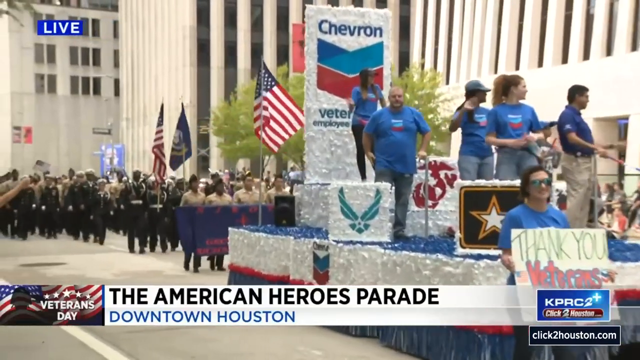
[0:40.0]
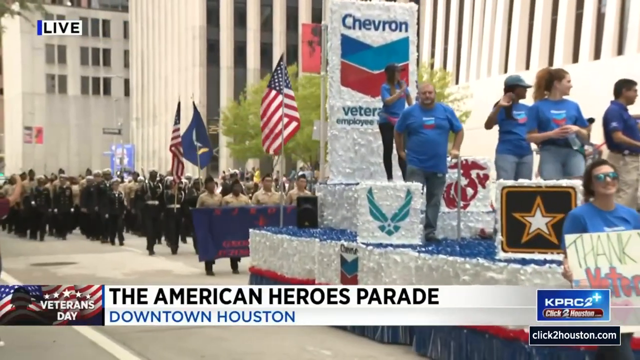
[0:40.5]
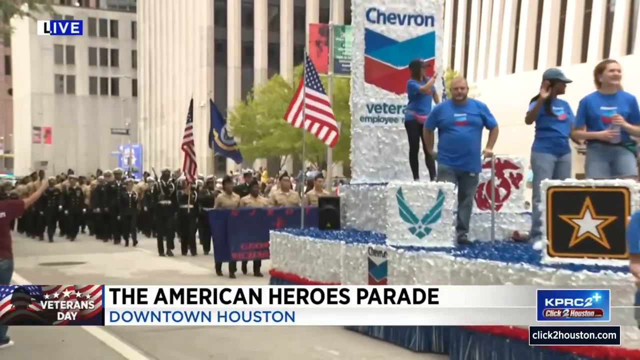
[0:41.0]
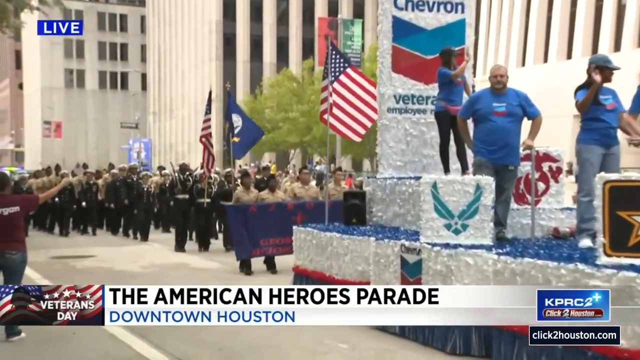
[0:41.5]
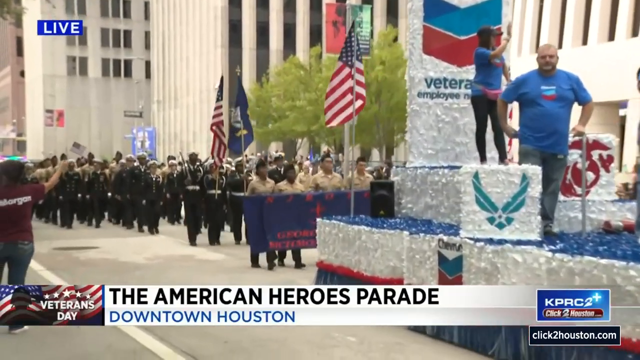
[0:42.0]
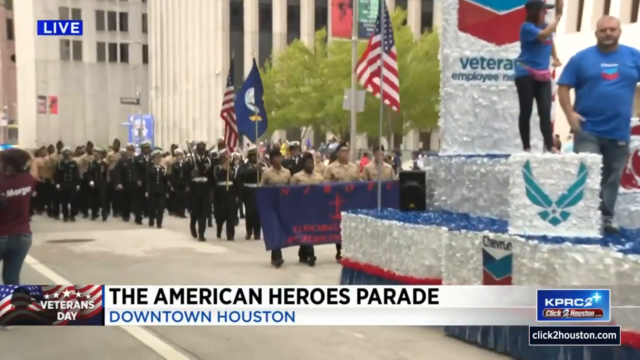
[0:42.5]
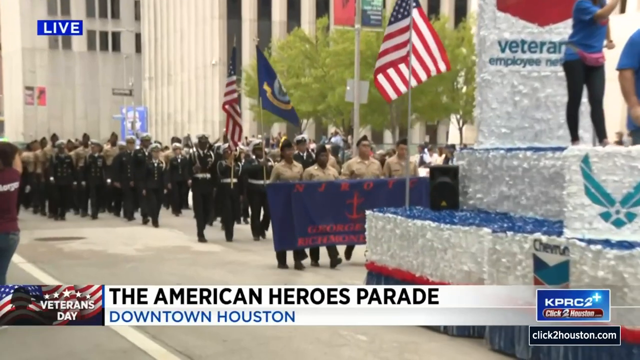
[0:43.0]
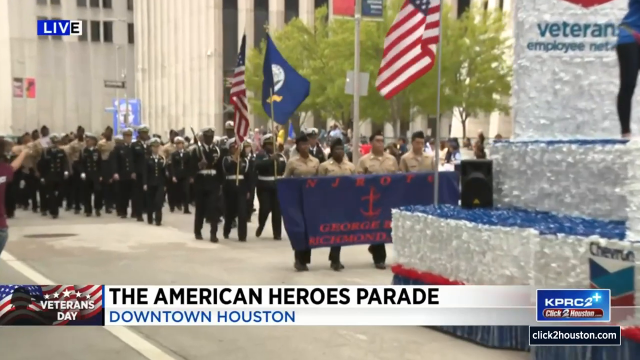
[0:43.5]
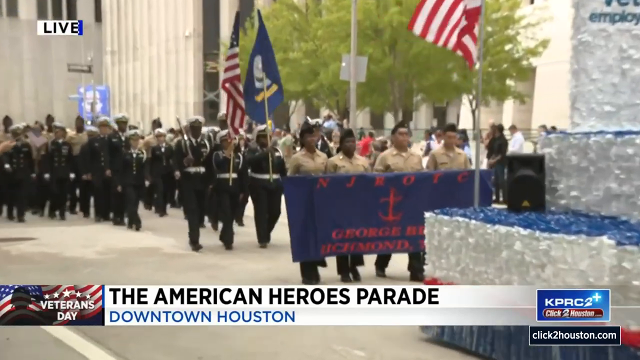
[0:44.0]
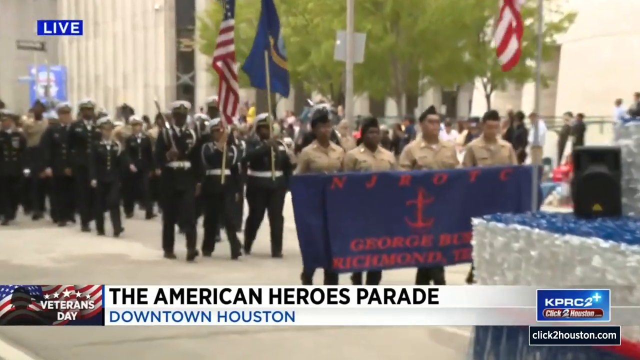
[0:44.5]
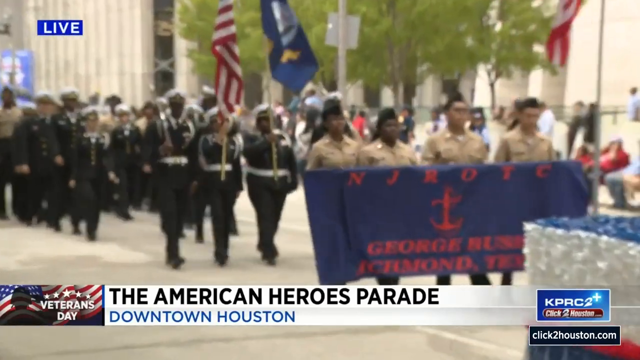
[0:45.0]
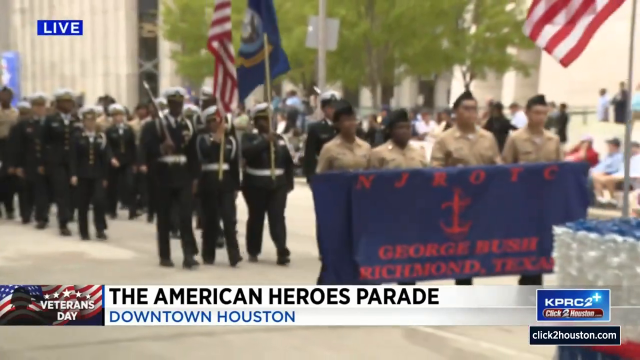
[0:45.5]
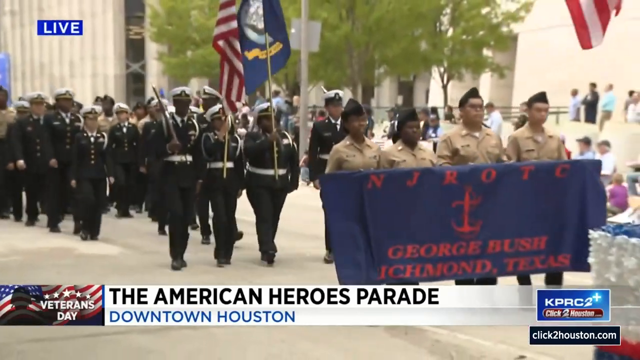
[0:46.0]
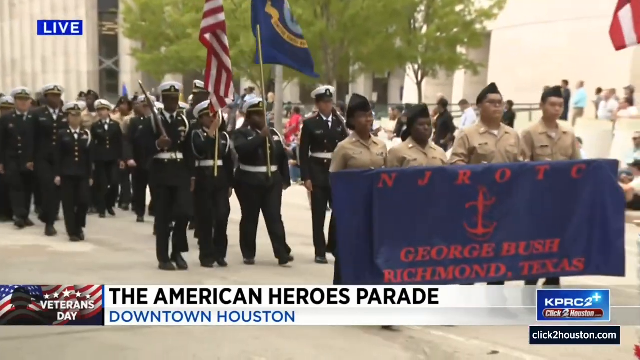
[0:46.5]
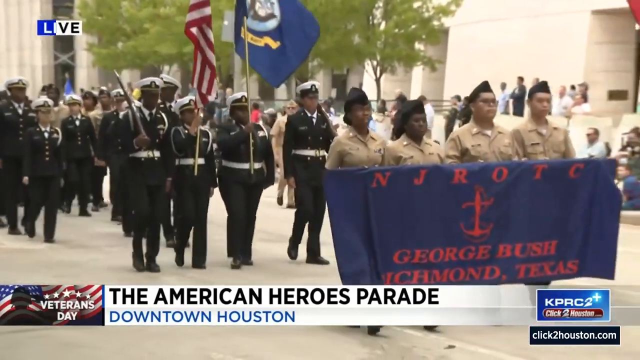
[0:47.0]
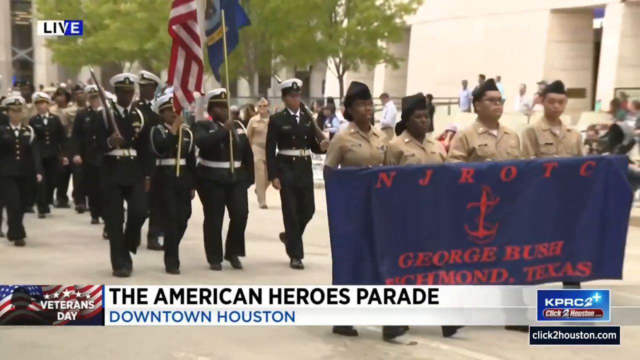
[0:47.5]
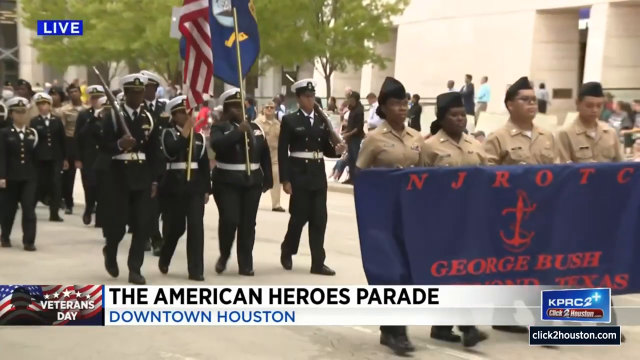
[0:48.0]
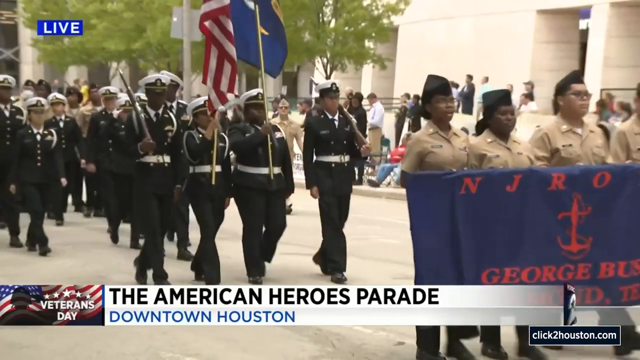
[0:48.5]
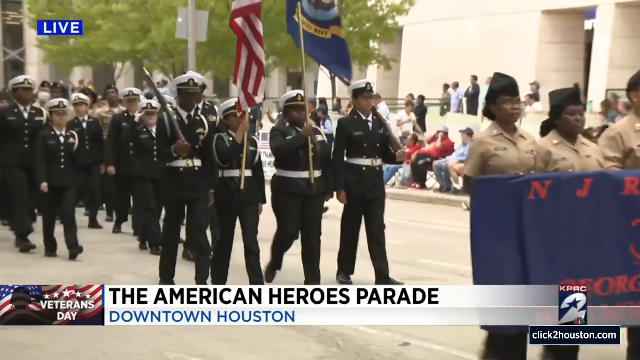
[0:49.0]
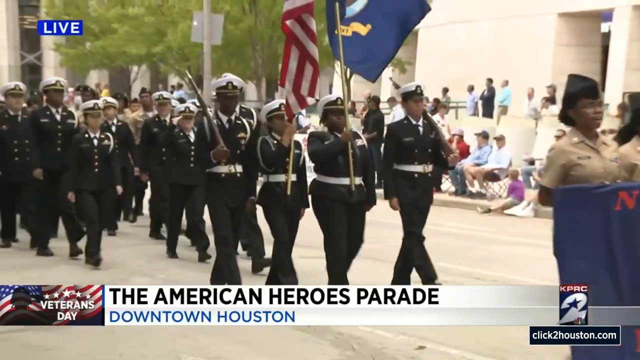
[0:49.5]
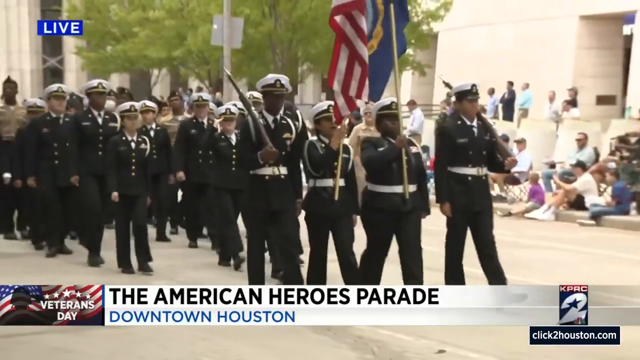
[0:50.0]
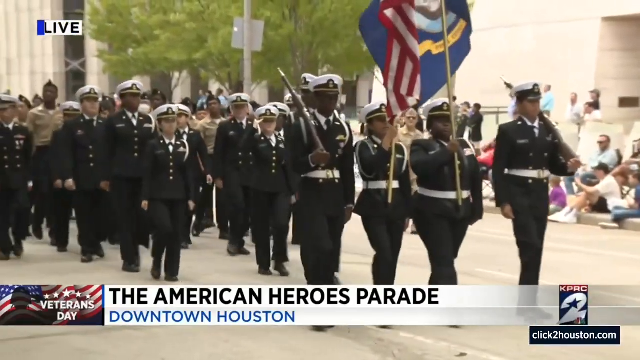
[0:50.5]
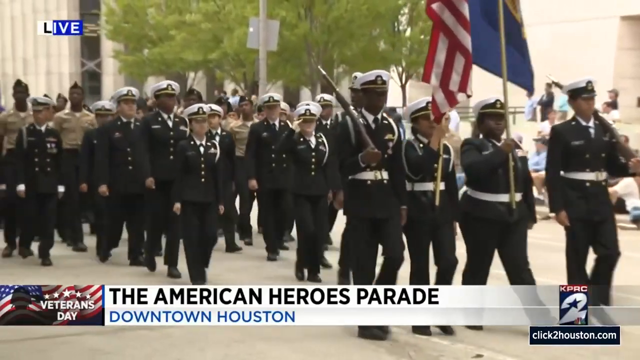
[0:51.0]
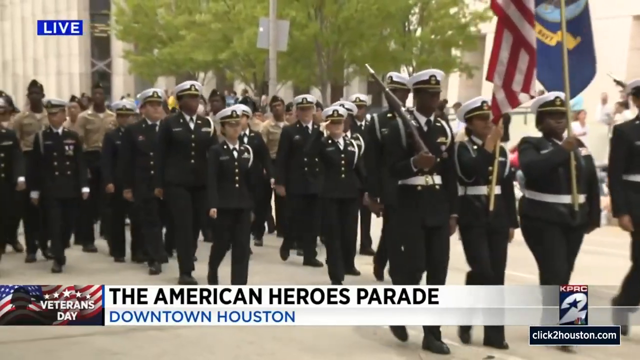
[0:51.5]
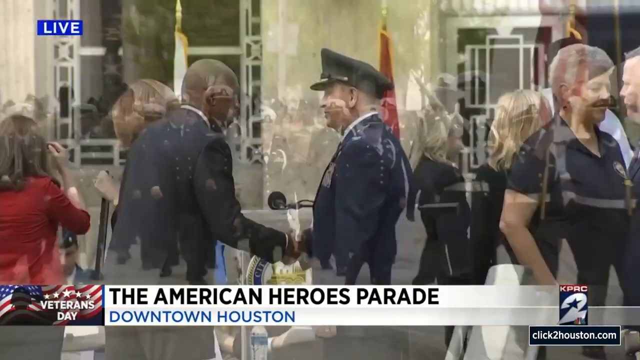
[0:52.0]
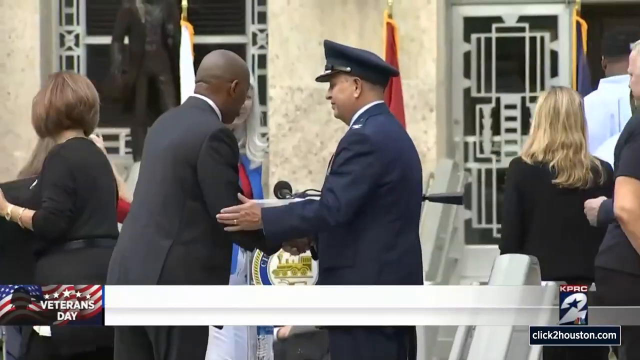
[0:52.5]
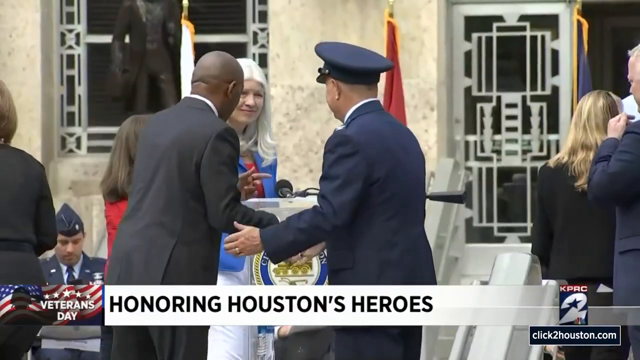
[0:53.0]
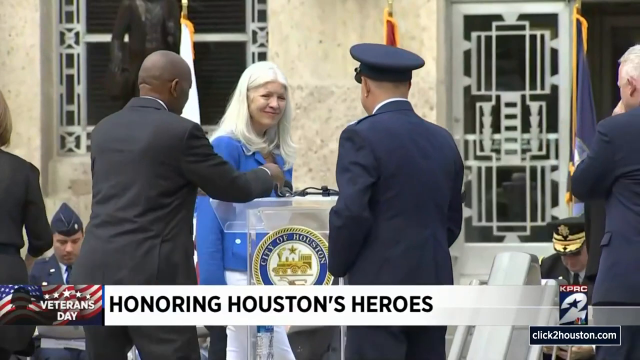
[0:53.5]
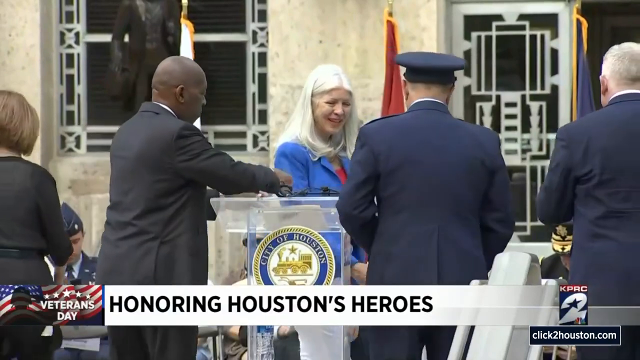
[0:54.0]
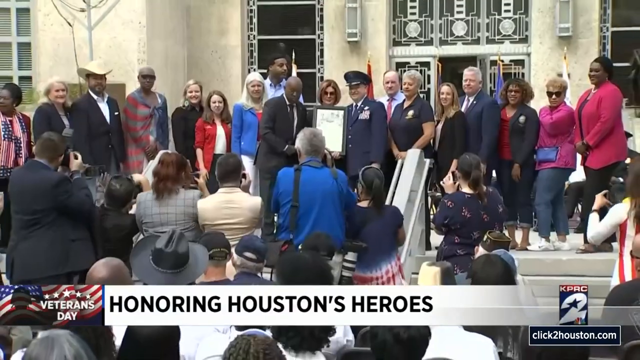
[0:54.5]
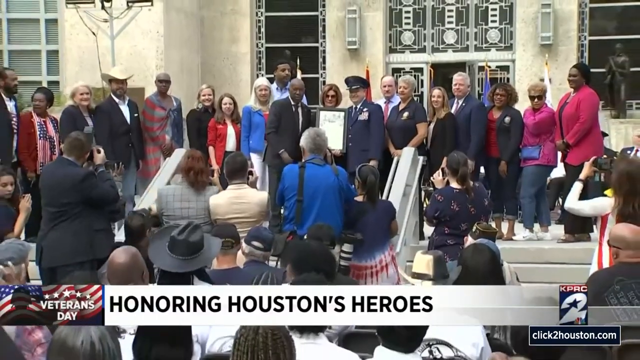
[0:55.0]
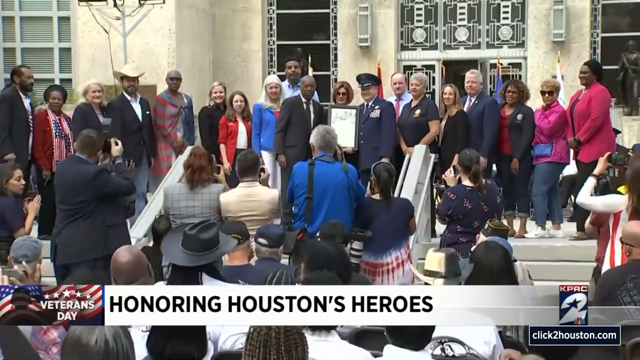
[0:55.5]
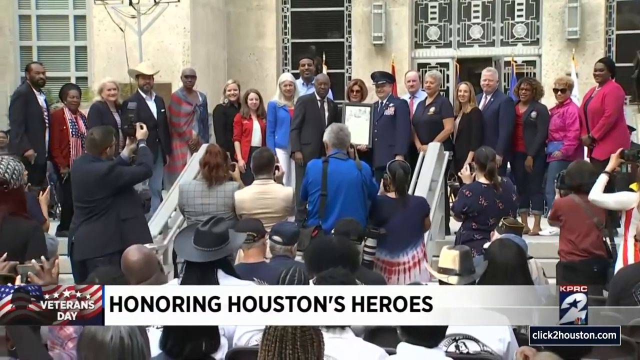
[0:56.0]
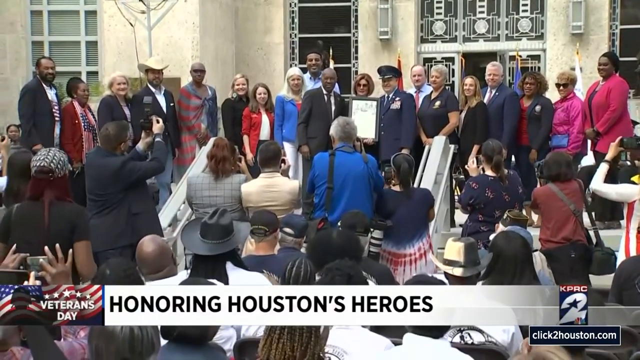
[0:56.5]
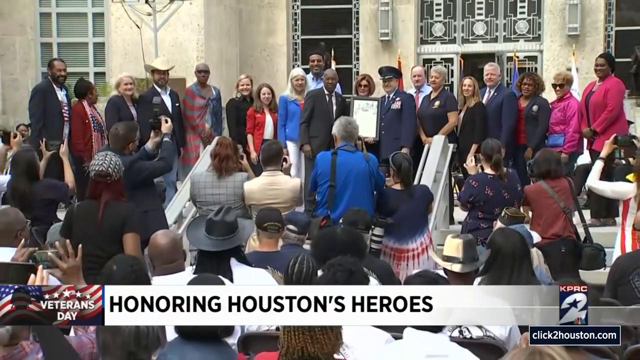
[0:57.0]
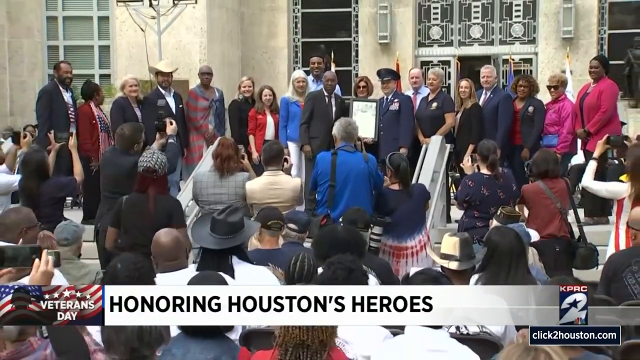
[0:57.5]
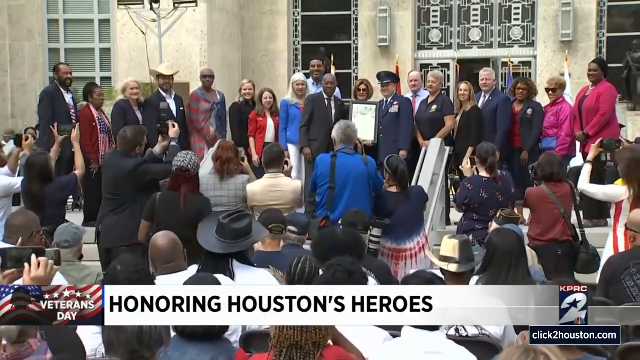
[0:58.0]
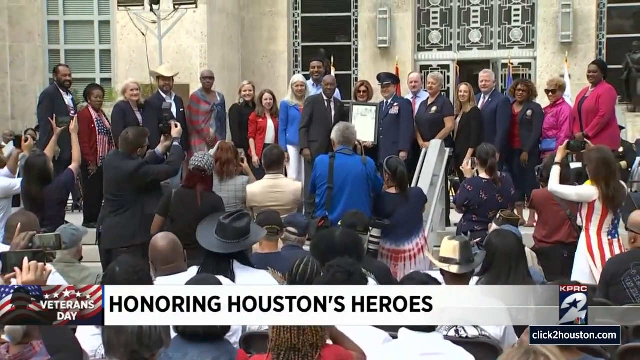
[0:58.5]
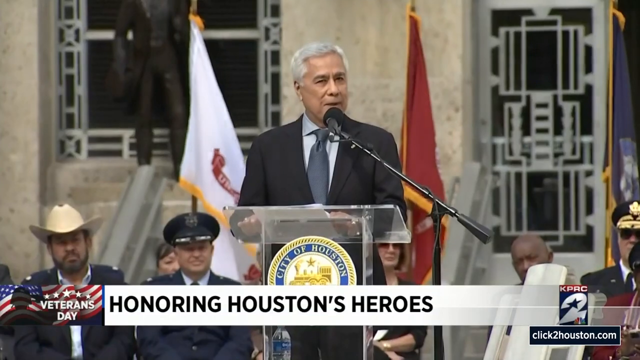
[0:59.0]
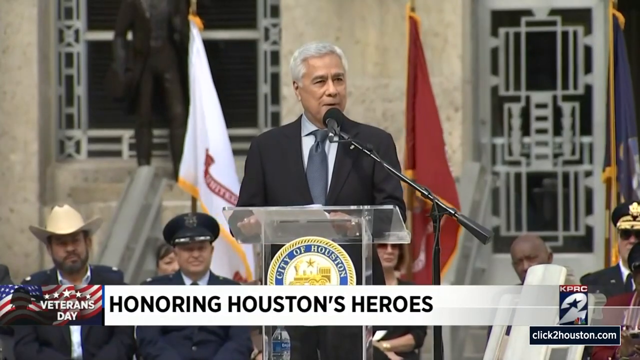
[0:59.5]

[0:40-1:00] People walk in the parade, with men in naval uniforms at the front. A blue banner with red text says "N-J-R-O-T-C-E," with "George Butch, Richmond, Texas" at the very bottom; the men holding this banner are younger than the ones behind. Some marchers hold ceremonial guns, pistol guns and other items. The video cuts to what looks like the steps of a government building, with a dais on a stage holding multiple seats and multiple flags in the background. The on-screen text wipes to read "honoring Houston's heroes" along with the Veterans Day logo. On the stage are people in military dress and others in casual clothing, some with cowboy hats and some with official military hats. At the very front is a clear podium with a logo reading "City of Houston." A man stands and speaks at the microphone; he wears a black suit jacket, a silver dress shirt and a dark steel gray tie, and is in his late 50s with salt-and-pepper hair. He rests his hand on the podium, at times touching it repeatedly for emphasis. Everyone on the dais then stands together around a plaque for a photo while the press stands slightly in front of them, offstage, to take pictures.